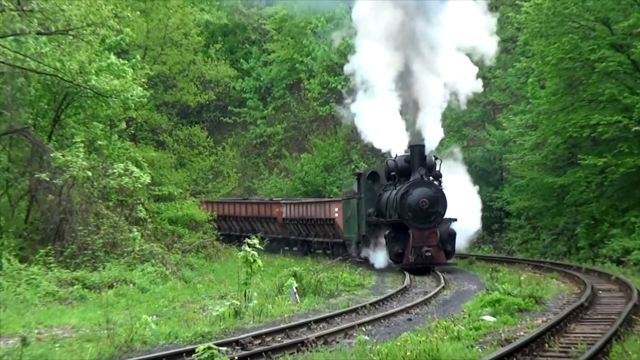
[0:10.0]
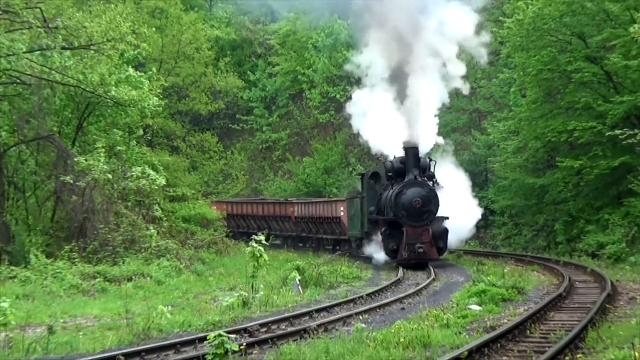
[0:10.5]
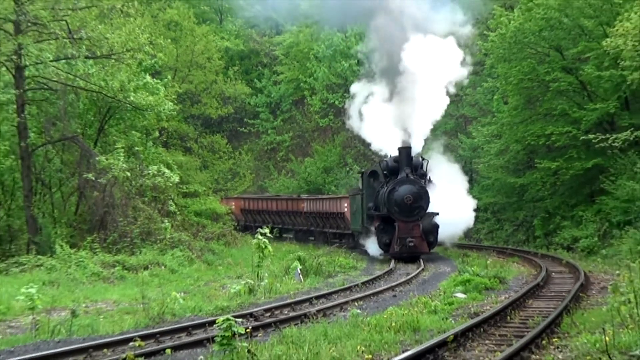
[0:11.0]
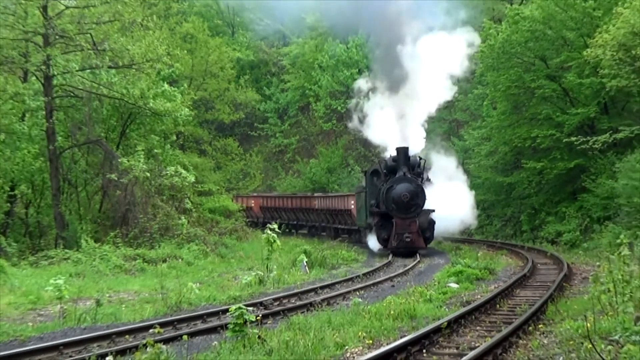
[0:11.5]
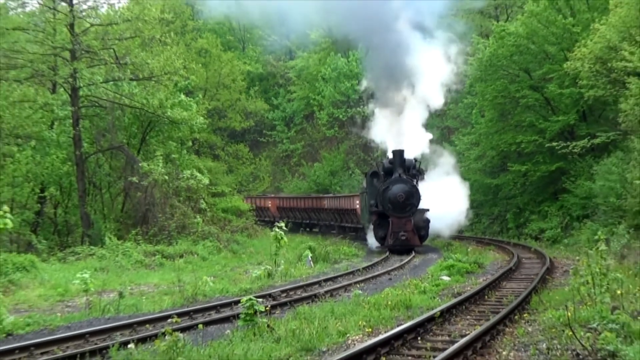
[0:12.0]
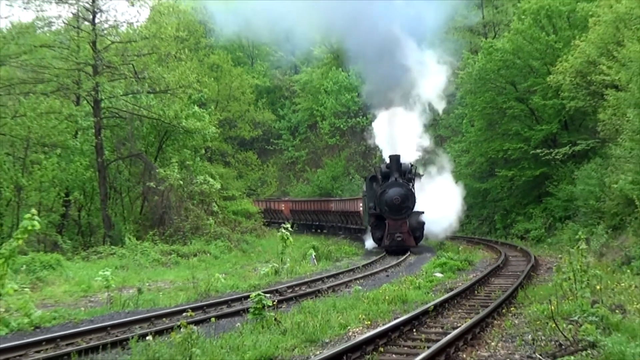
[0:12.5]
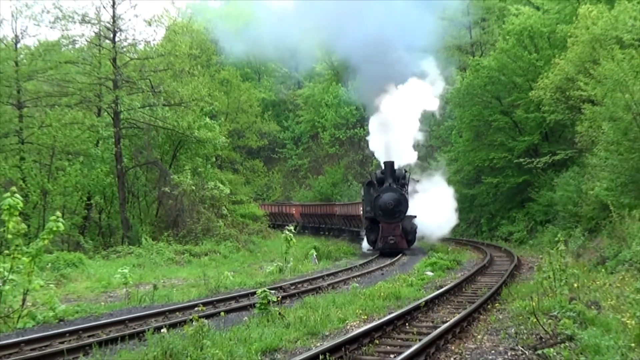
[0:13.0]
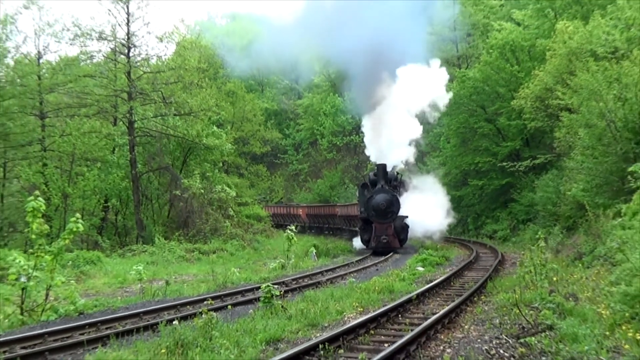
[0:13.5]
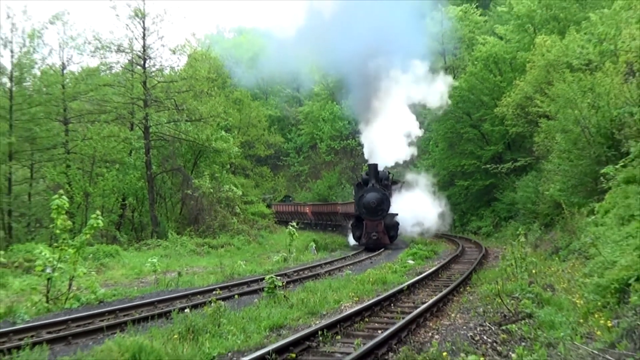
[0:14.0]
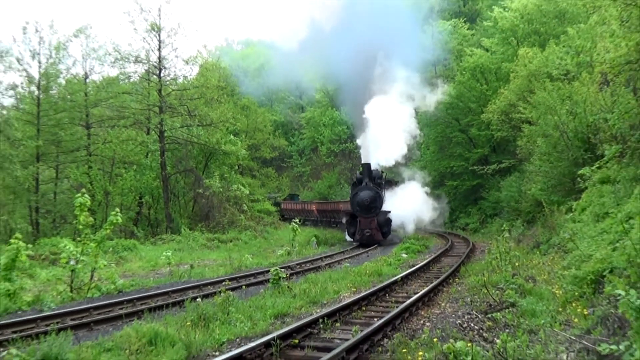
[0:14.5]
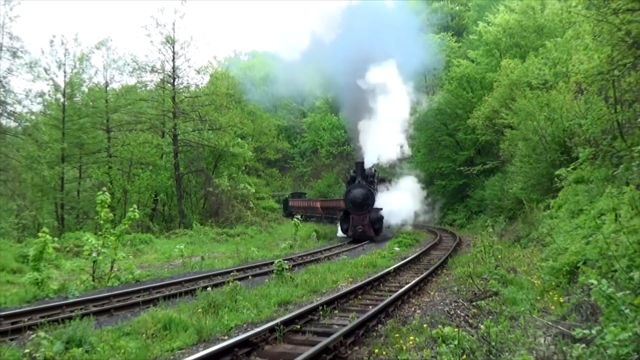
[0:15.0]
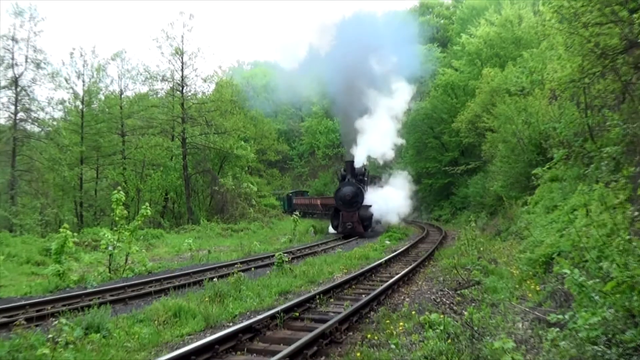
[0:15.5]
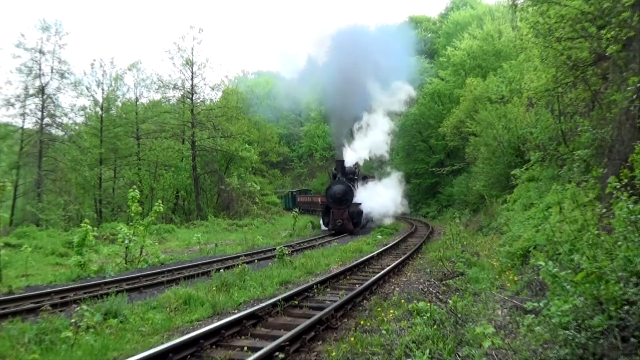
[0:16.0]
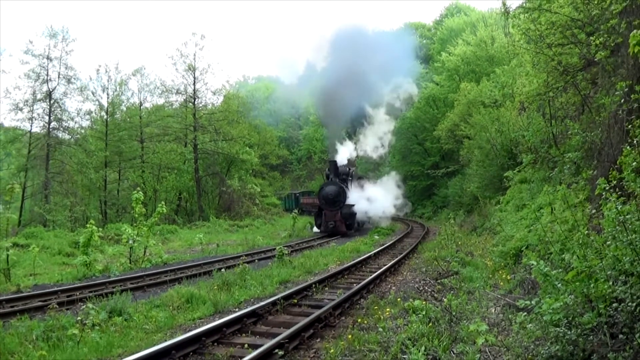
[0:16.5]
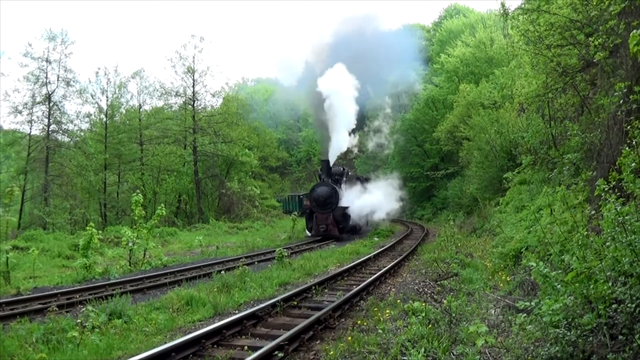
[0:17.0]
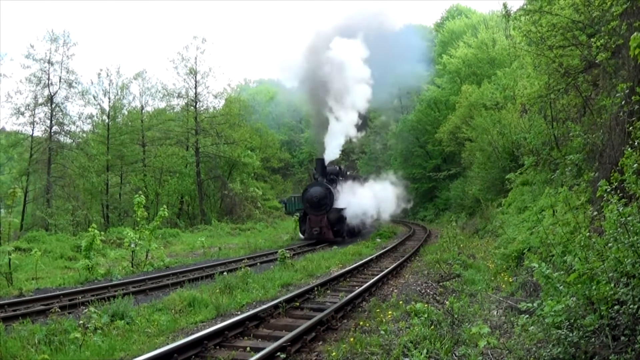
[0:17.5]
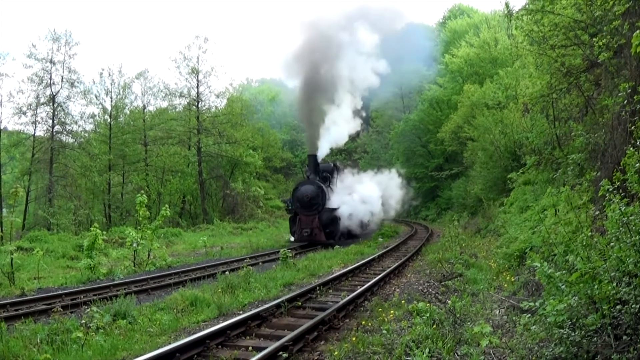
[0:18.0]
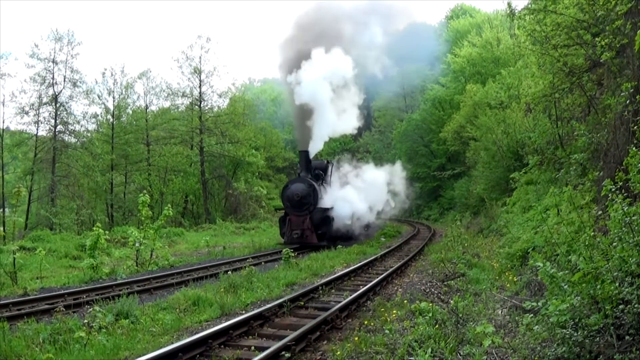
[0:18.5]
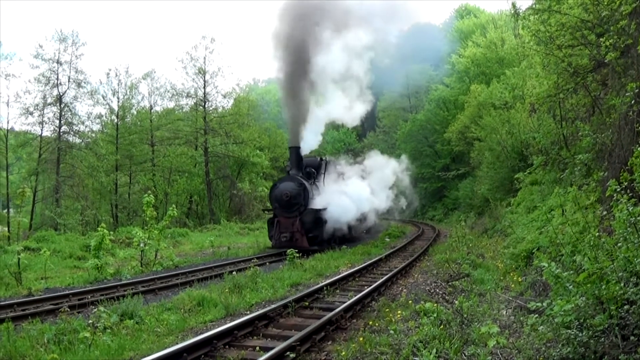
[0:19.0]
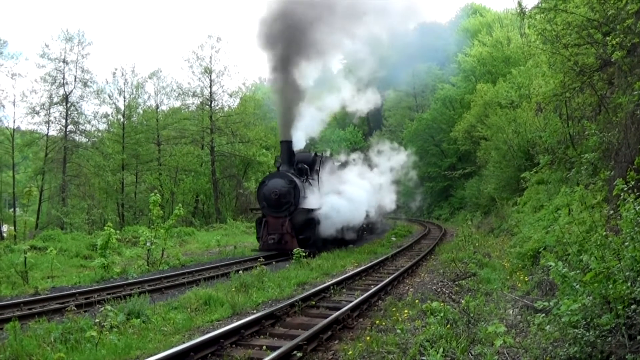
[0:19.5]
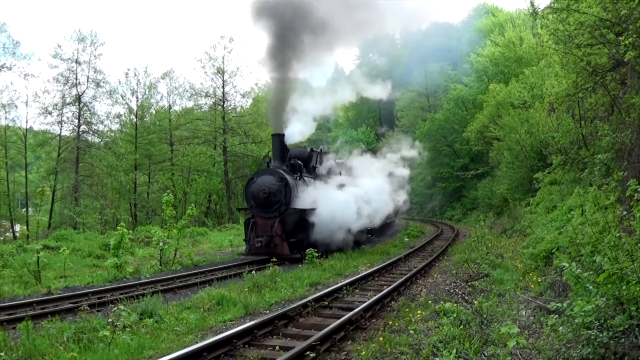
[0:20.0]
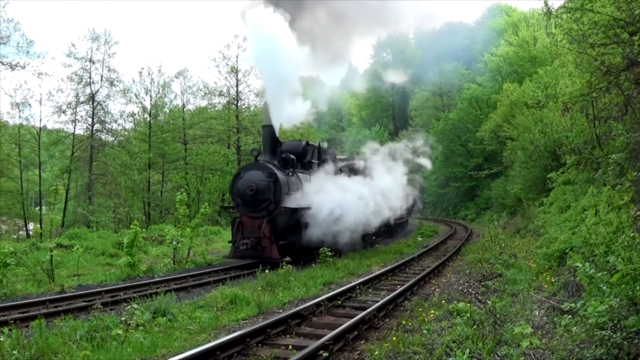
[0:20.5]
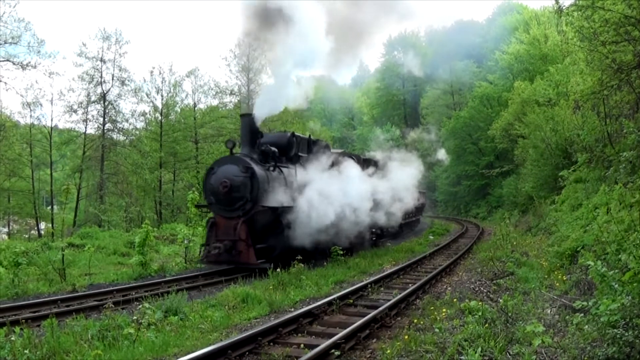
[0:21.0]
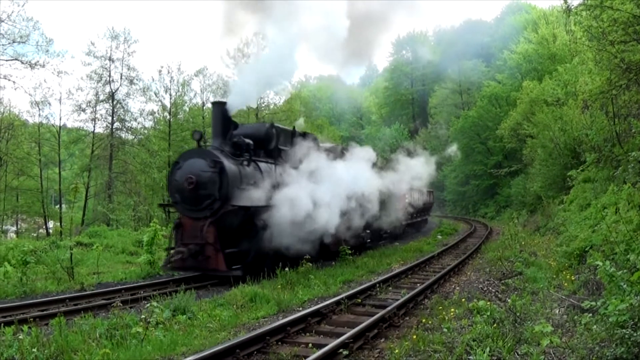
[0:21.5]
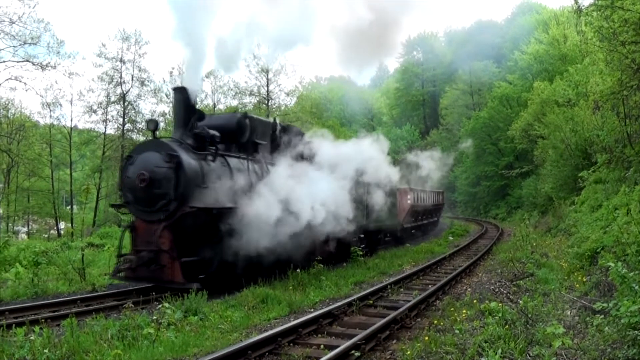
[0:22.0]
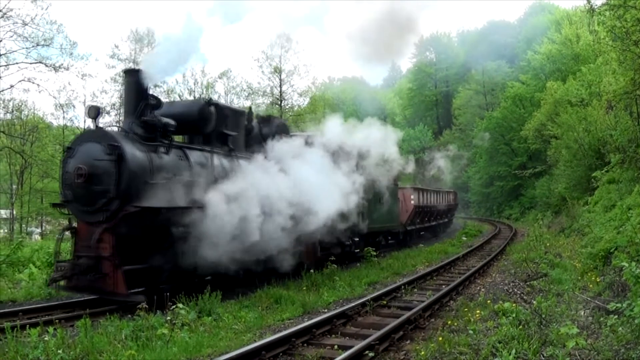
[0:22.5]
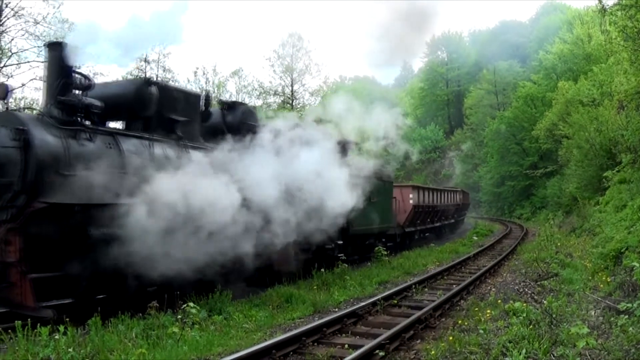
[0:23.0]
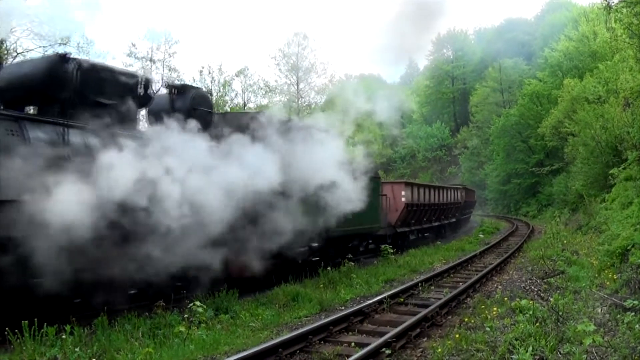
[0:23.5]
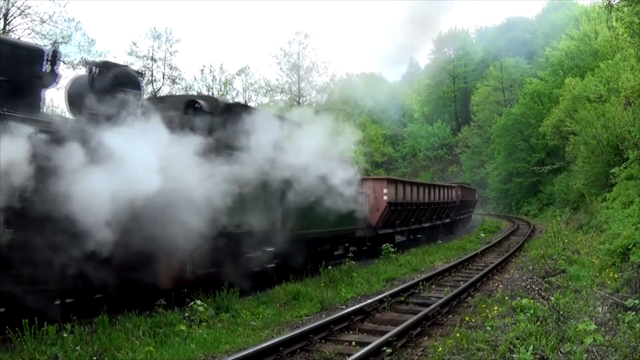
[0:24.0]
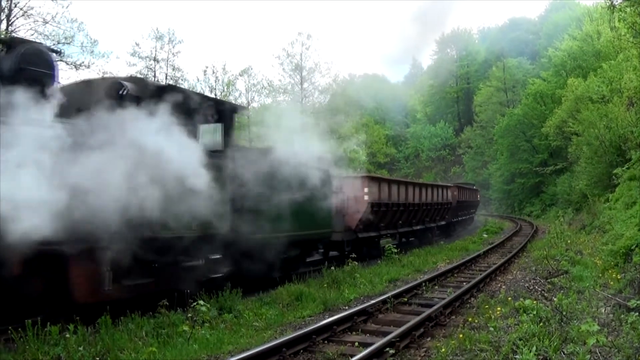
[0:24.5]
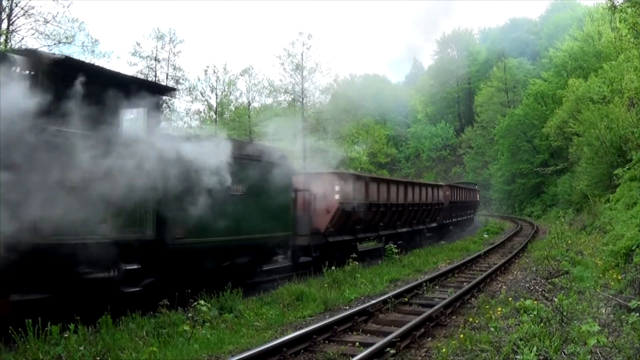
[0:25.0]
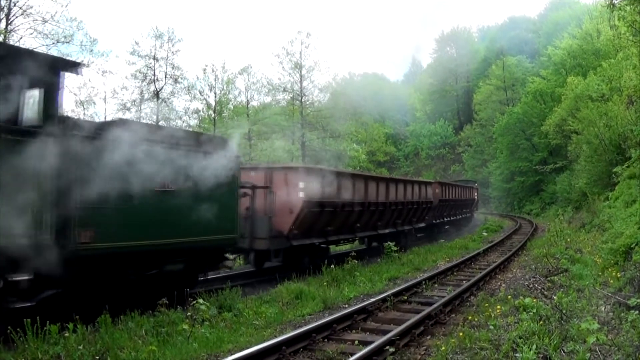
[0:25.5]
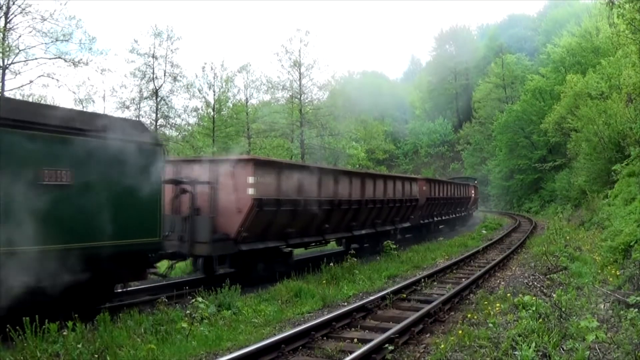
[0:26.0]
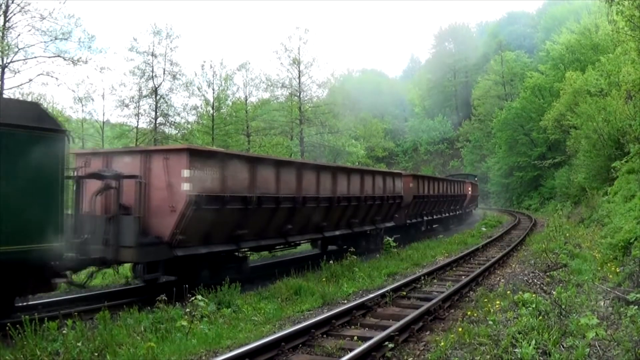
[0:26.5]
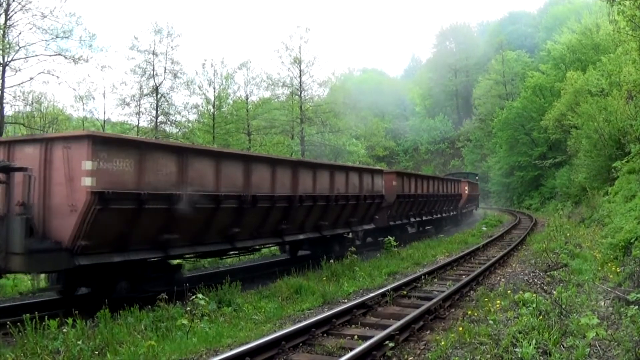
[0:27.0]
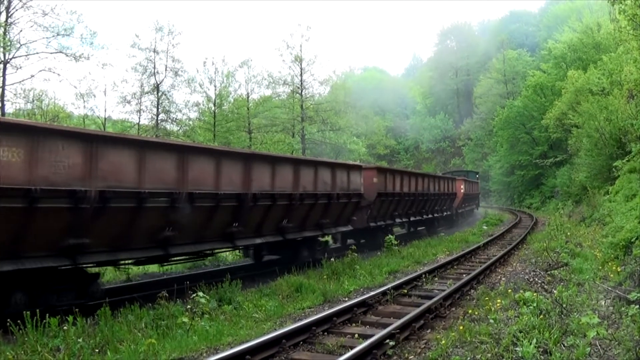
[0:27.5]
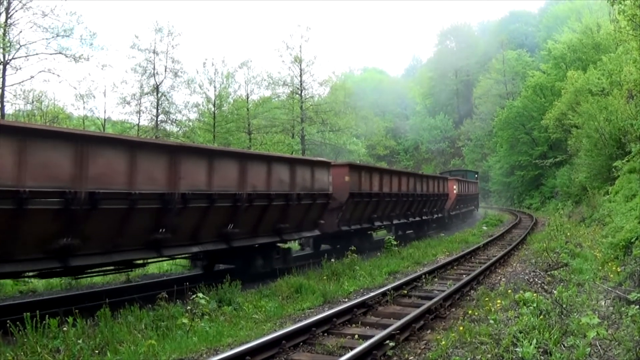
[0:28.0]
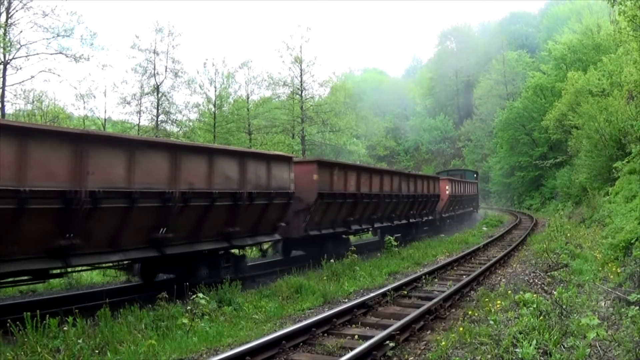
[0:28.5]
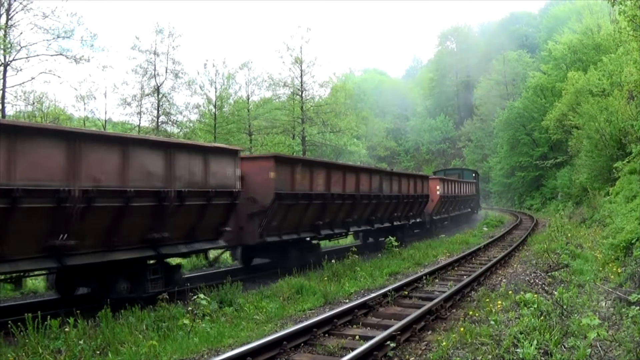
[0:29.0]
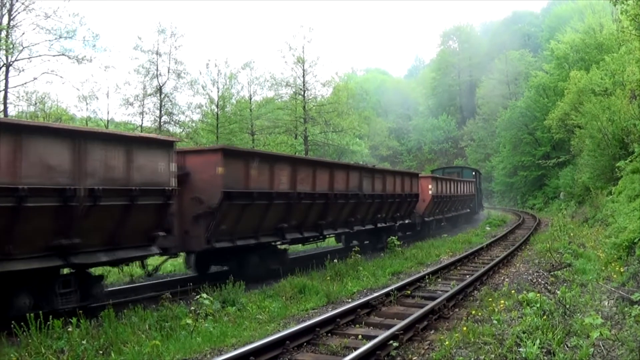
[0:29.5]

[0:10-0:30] A closer view shows the two train tracks and a dark black steam engine chugging up the tracks. It passes, pulling four cars, three of which are empty coal cars, while steam billows around the engine. There is quite a bit of weed growth between the tracks.